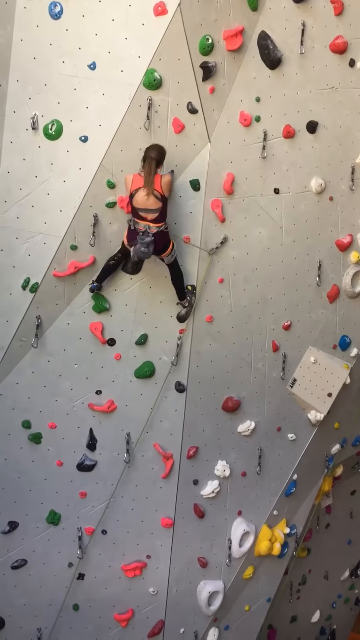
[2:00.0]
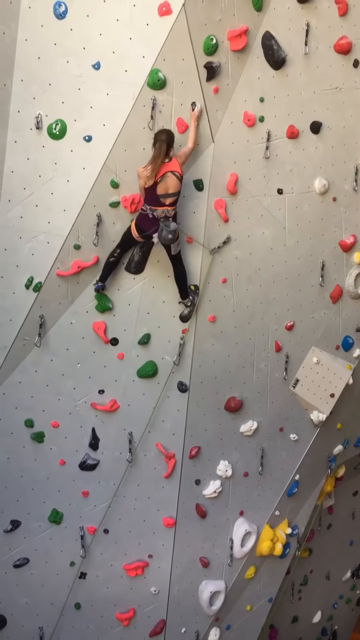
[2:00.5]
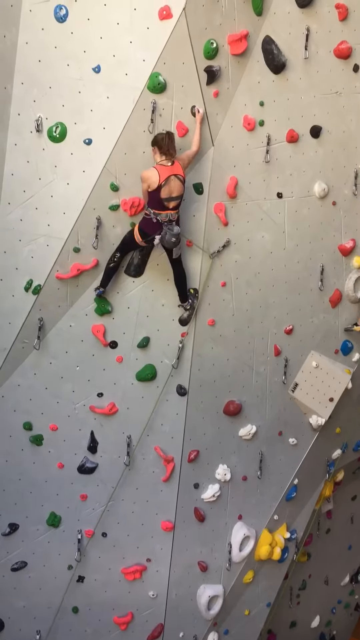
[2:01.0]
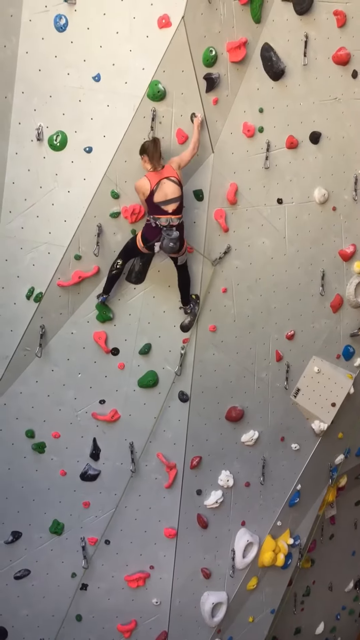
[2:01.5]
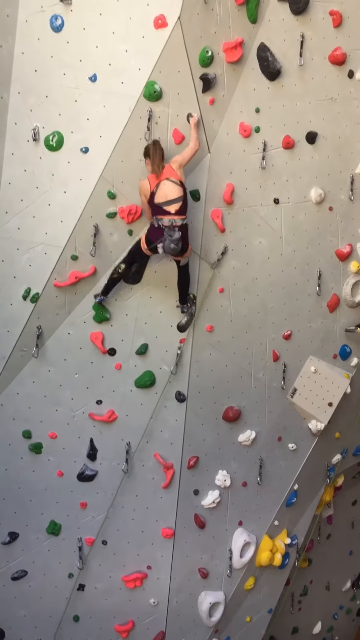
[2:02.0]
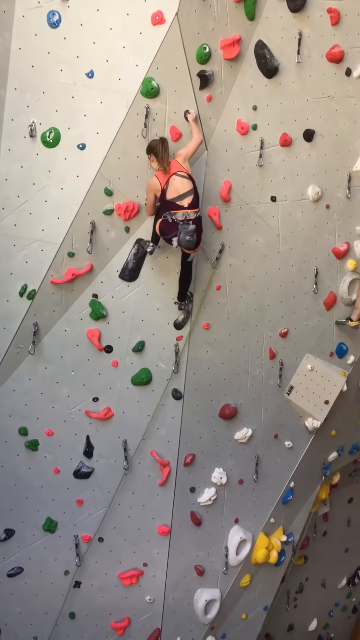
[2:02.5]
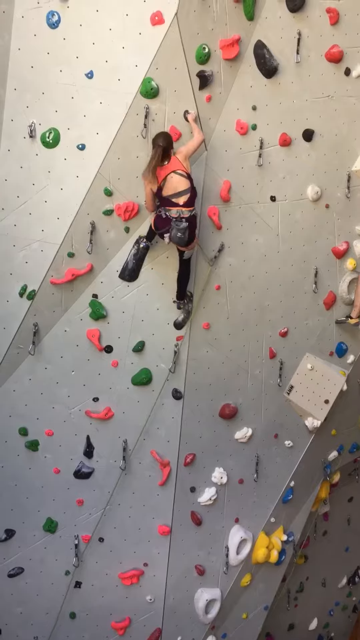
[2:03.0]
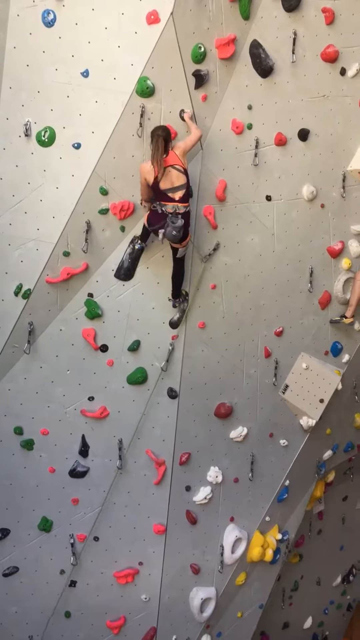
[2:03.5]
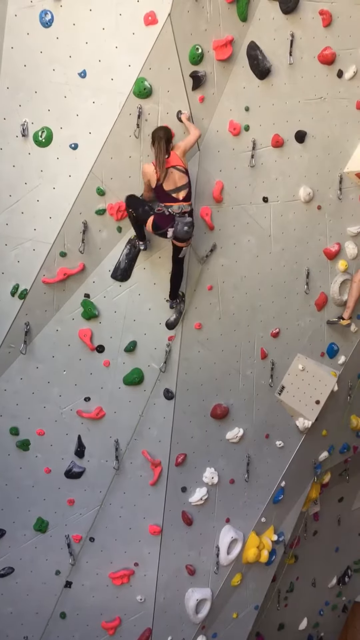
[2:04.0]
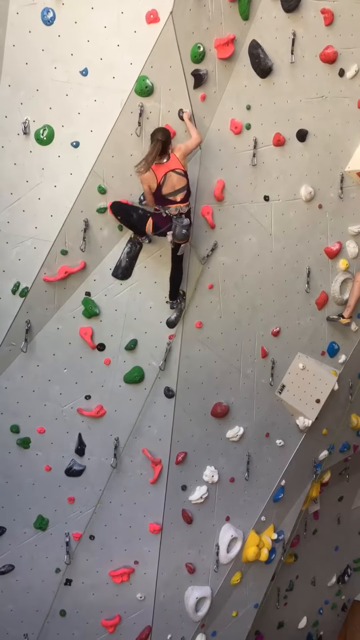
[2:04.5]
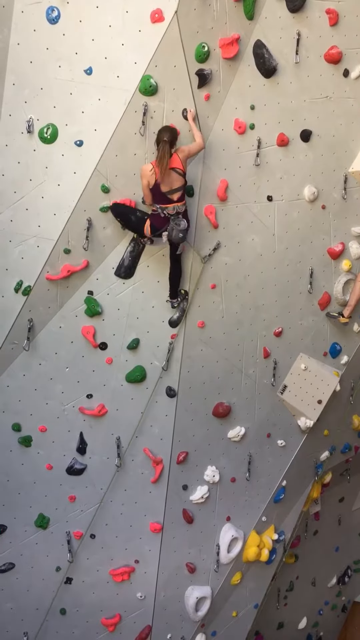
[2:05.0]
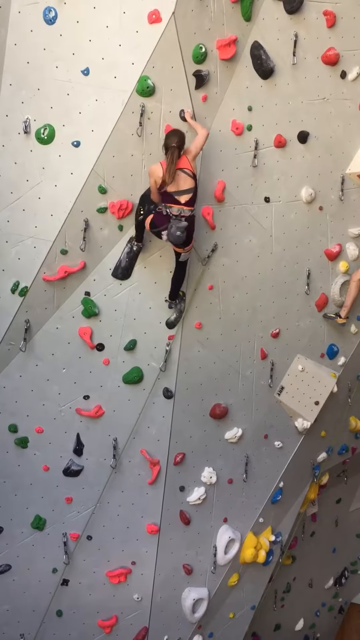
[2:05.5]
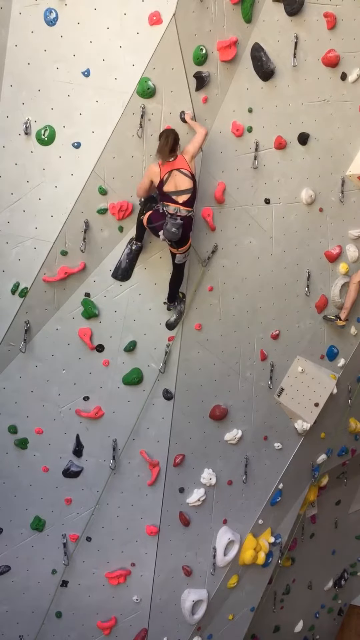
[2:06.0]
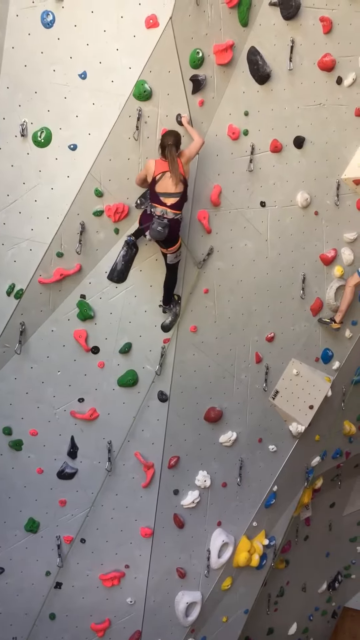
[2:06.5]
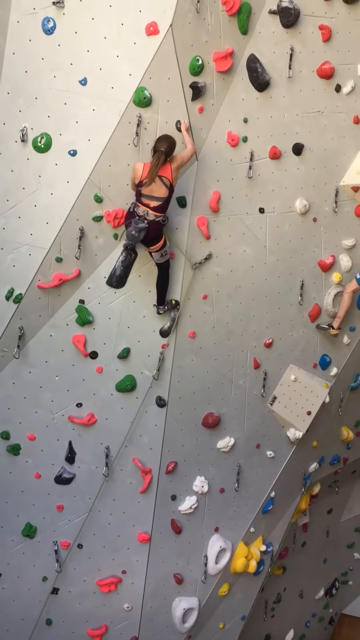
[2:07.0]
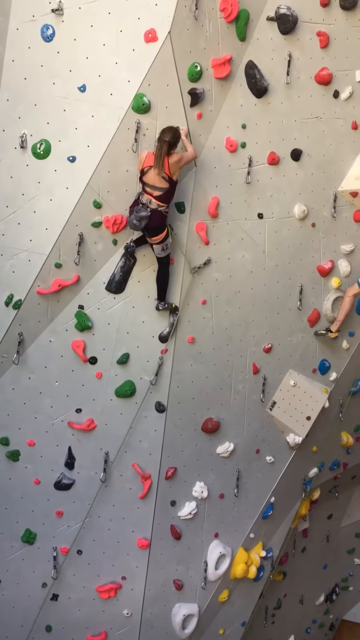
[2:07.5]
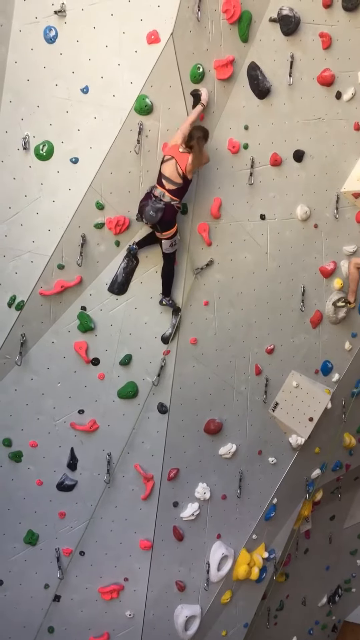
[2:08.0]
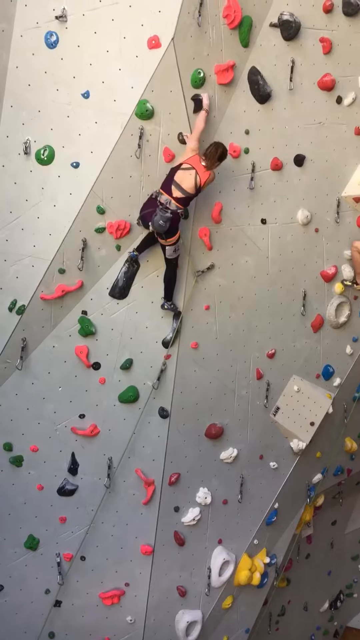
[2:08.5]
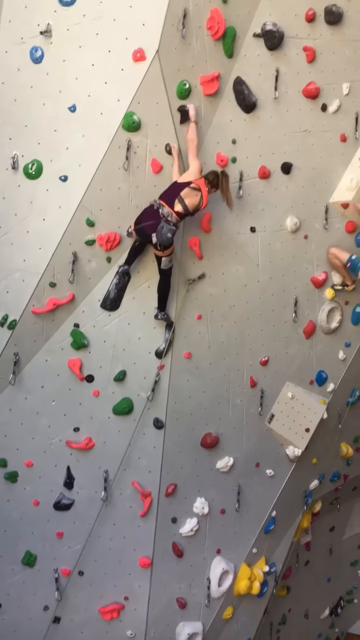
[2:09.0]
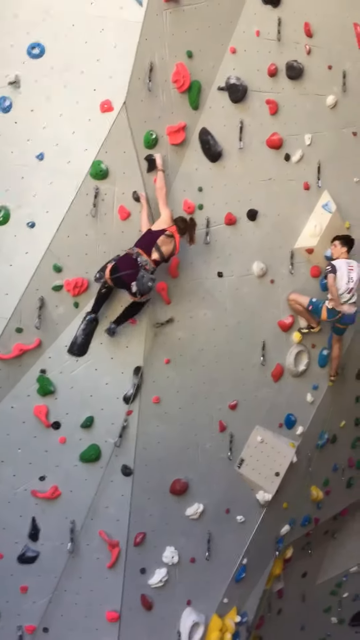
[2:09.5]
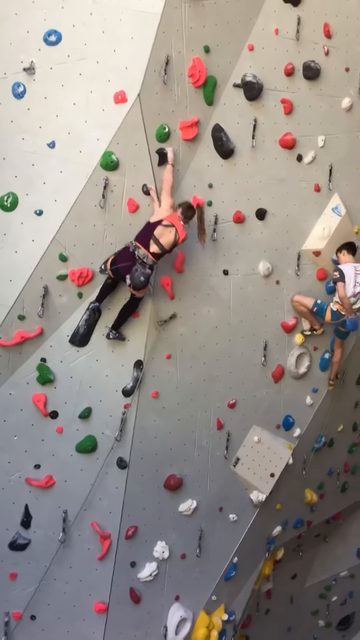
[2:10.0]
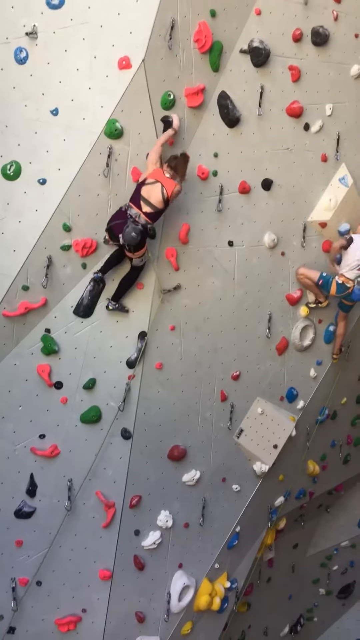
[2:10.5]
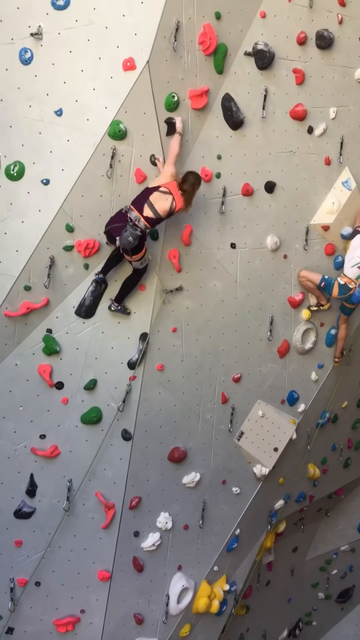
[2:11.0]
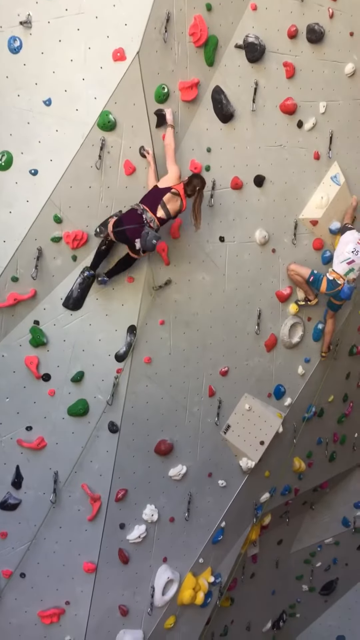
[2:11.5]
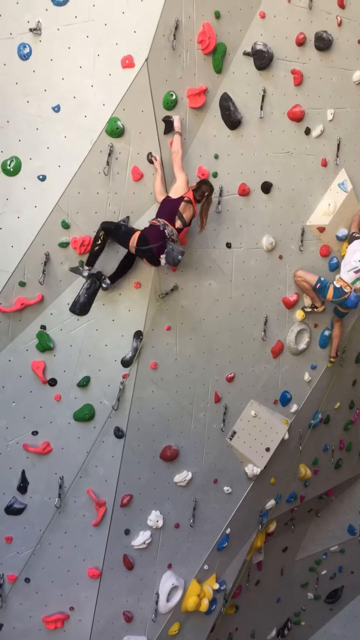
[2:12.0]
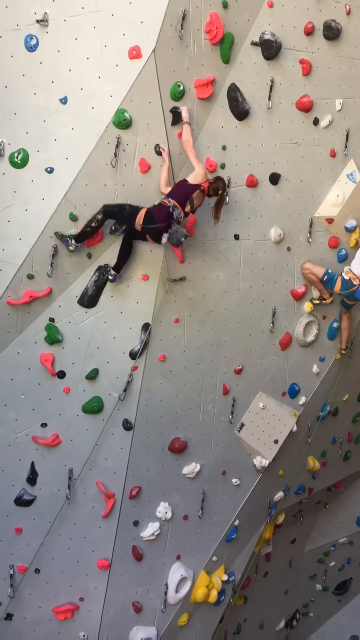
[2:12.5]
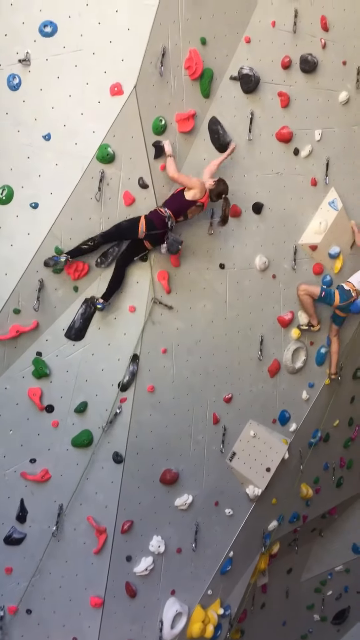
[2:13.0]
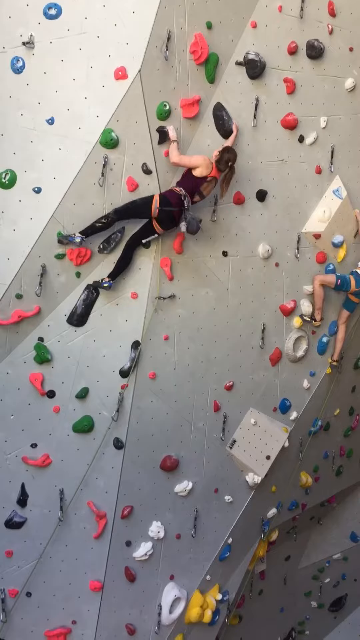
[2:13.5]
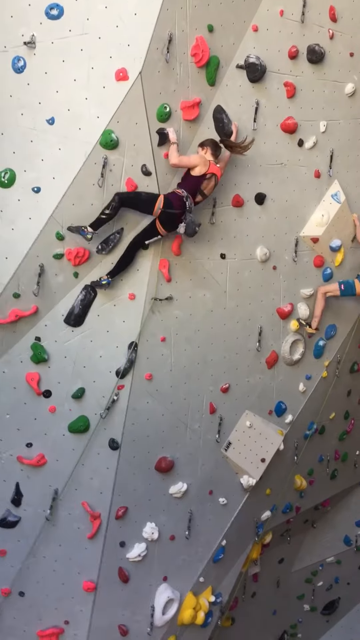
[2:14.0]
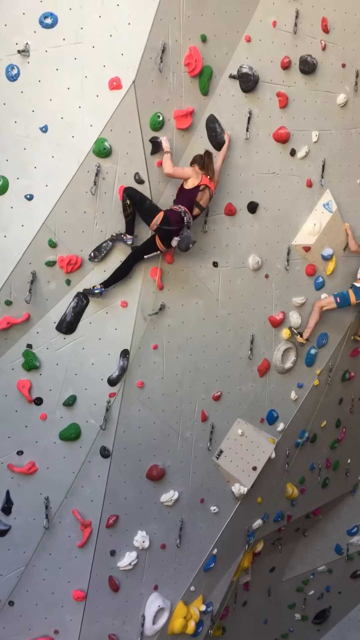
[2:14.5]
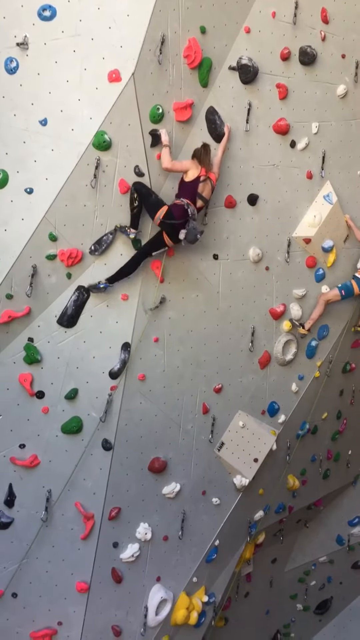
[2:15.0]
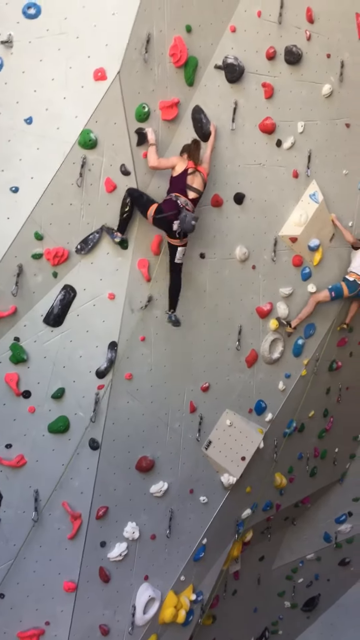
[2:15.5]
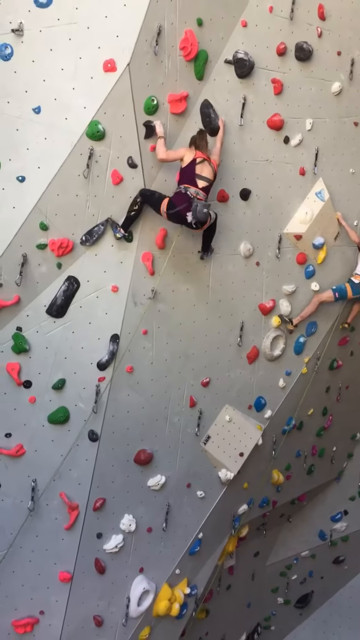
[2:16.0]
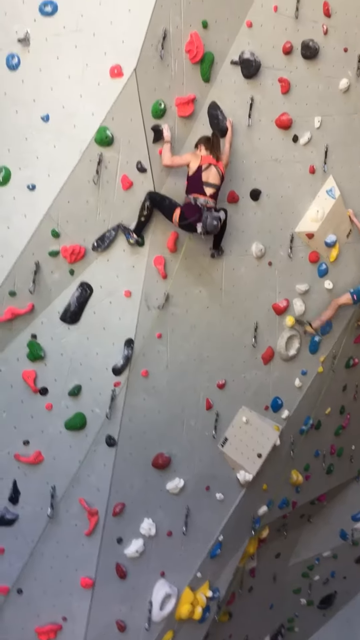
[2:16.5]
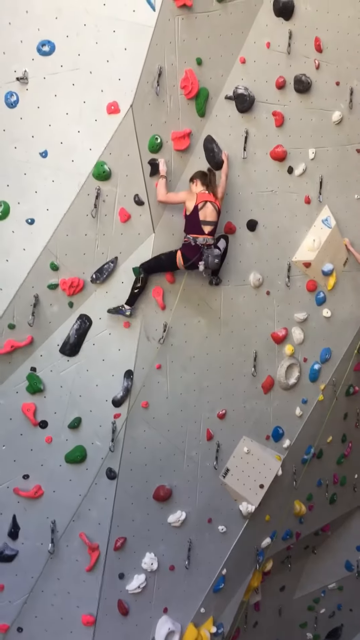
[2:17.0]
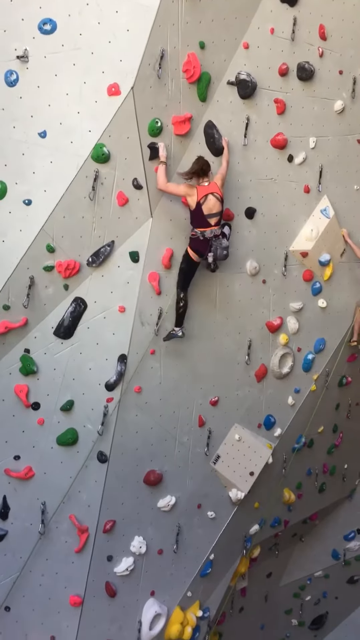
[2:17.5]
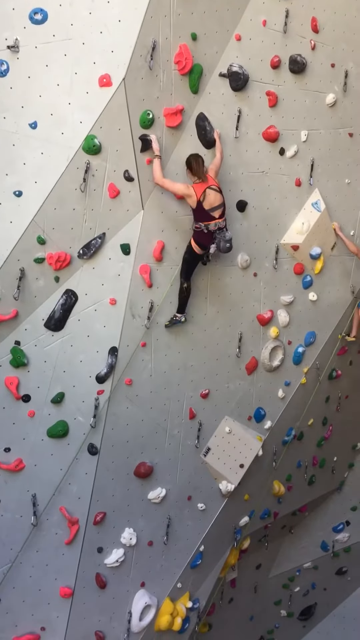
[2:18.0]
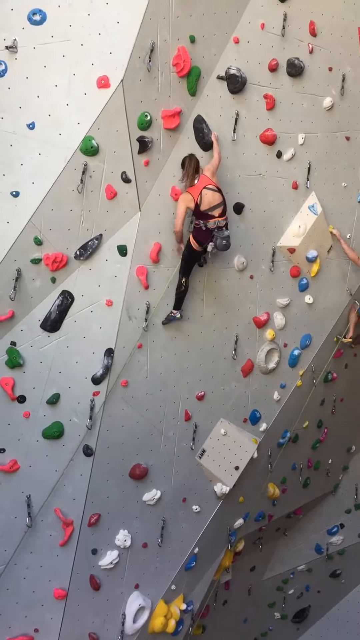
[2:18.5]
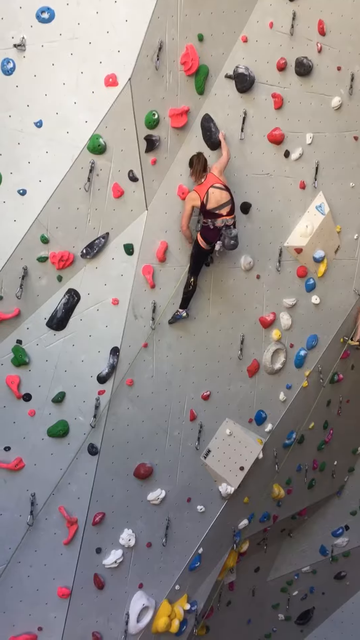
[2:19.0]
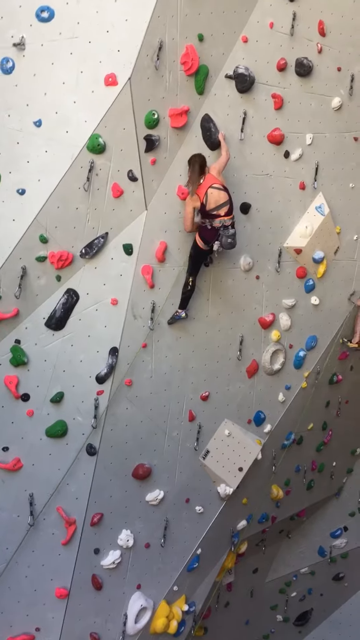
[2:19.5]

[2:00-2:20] A woman stands facing a gray climbing wall covered in green, black, pink, red, yellow, white, and blue pieces and chains that the climbers use. She reaches up and grabs a black piece with her right hand, then raises her left knee and pushes herself up with it, bending the knee. She reaches up with her left hand and stretches toward the right. To her right, another climber in a white shirt and blue pants reaches behind himself as he continues to climb. The woman reaches to a black piece on her left side with her right arm and stretches her body out diagonally, then reaches with her right arm toward a black piece over her head. She swings her right leg to the right while positioning her left leg on a black piece to her left for stability, then swings her left leg under herself and reaches down toward her left leg.